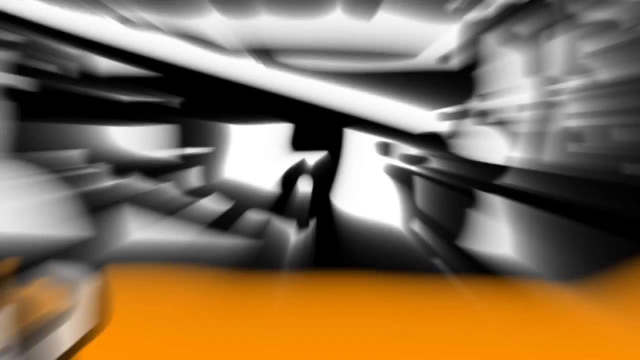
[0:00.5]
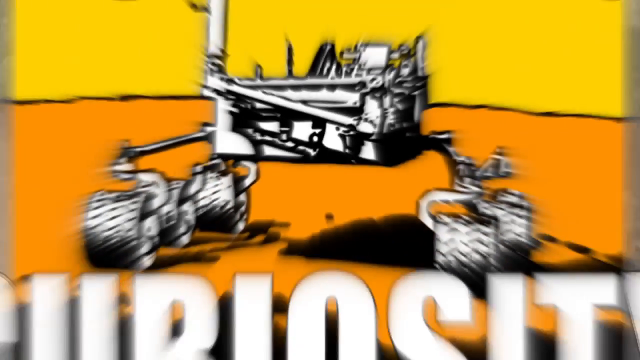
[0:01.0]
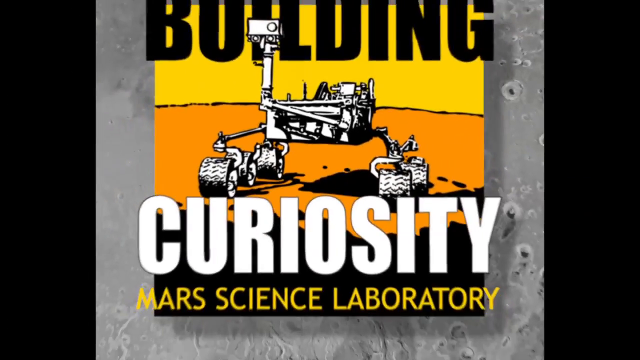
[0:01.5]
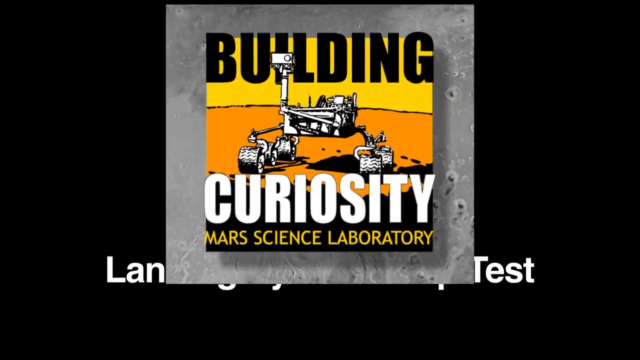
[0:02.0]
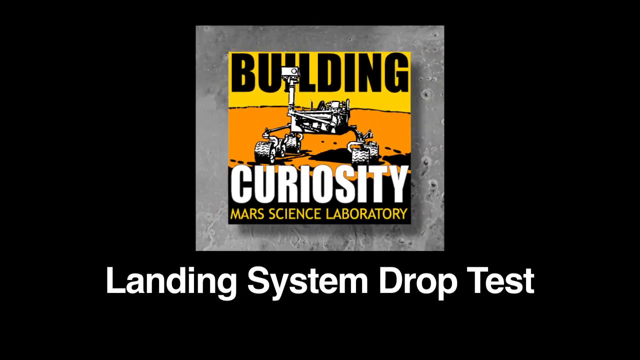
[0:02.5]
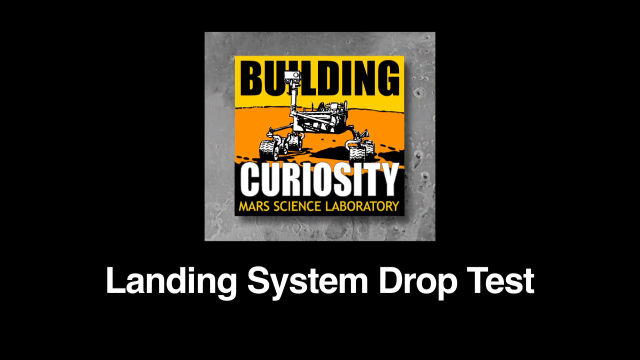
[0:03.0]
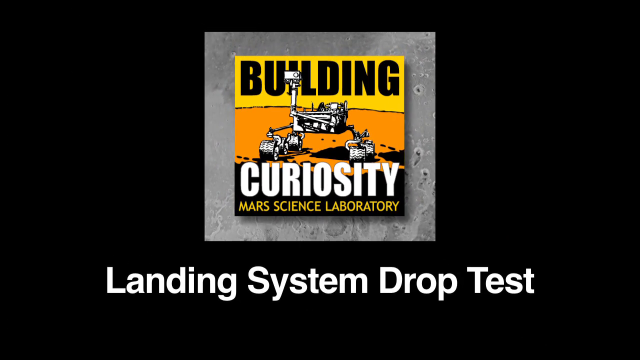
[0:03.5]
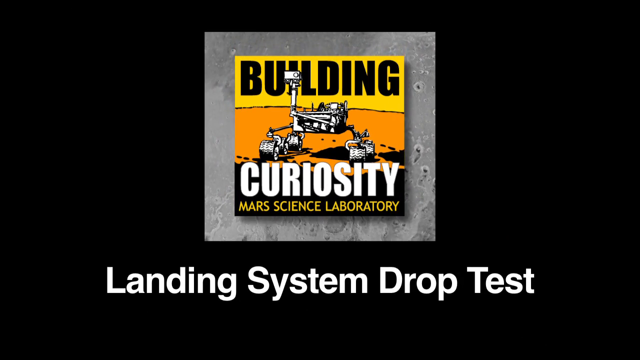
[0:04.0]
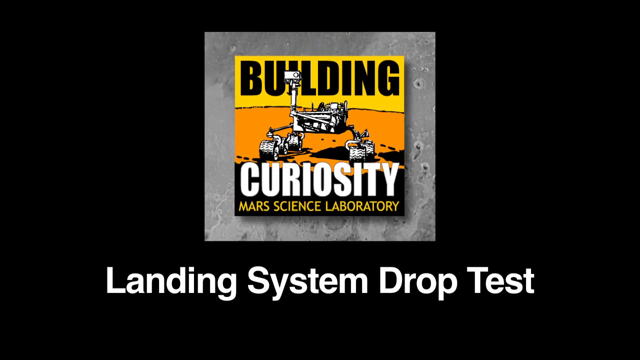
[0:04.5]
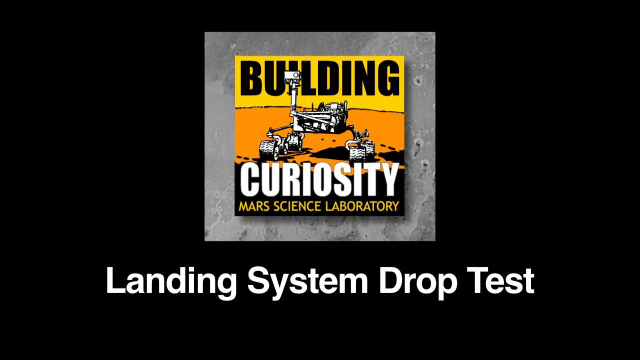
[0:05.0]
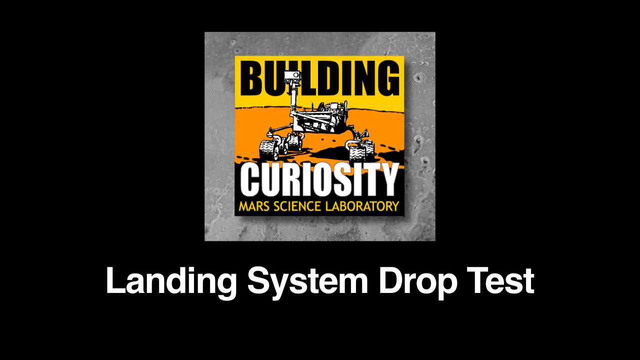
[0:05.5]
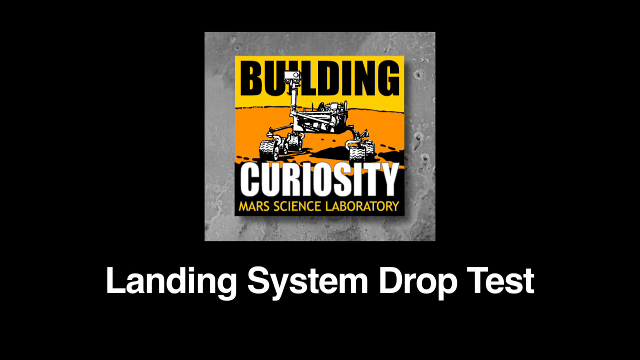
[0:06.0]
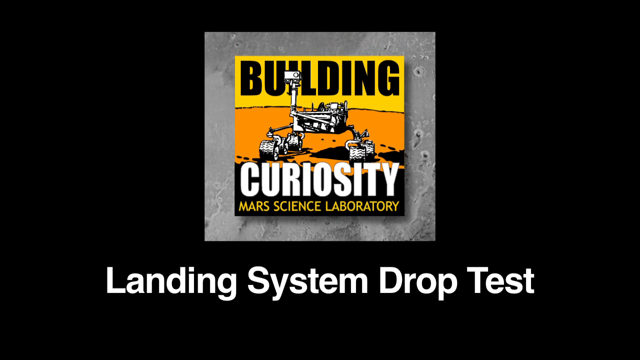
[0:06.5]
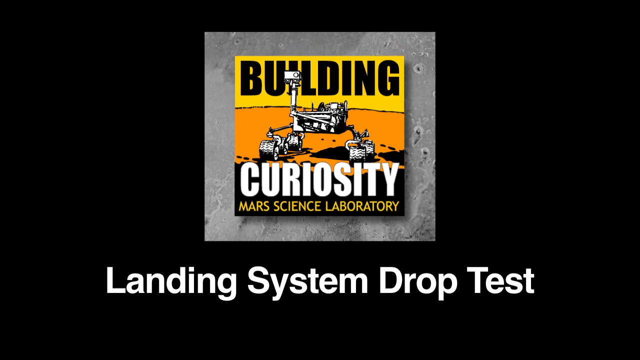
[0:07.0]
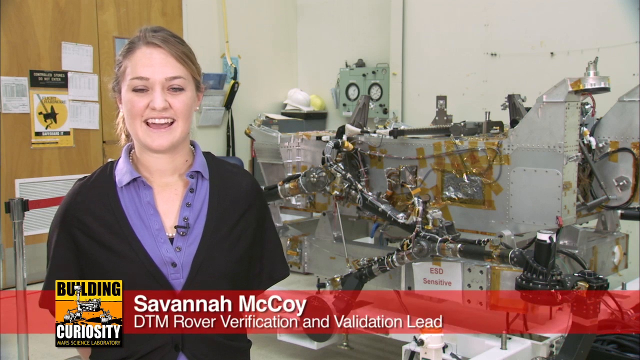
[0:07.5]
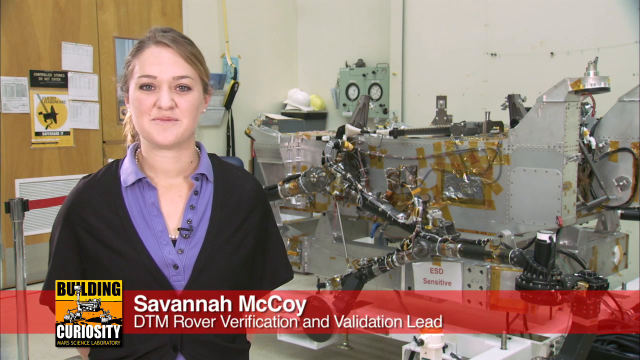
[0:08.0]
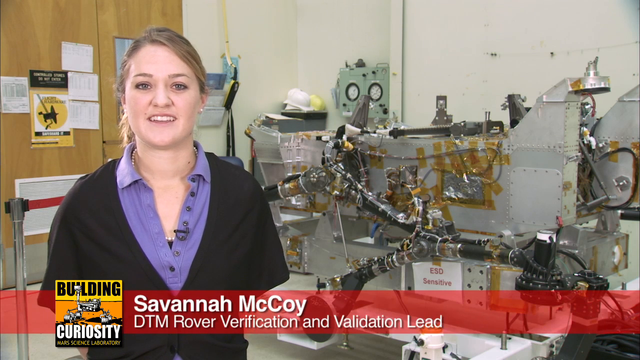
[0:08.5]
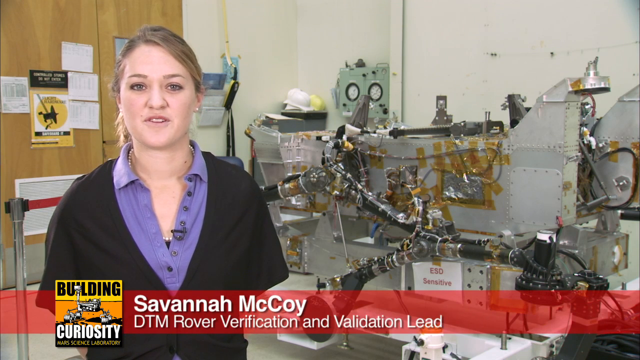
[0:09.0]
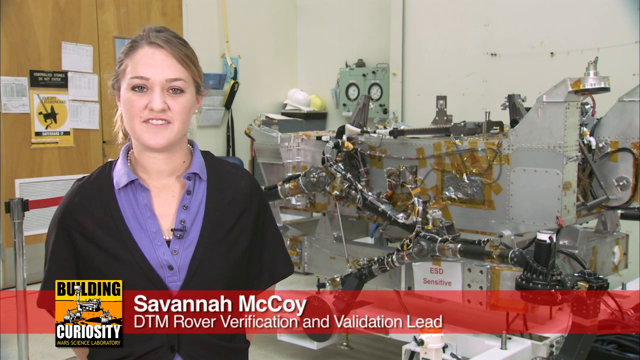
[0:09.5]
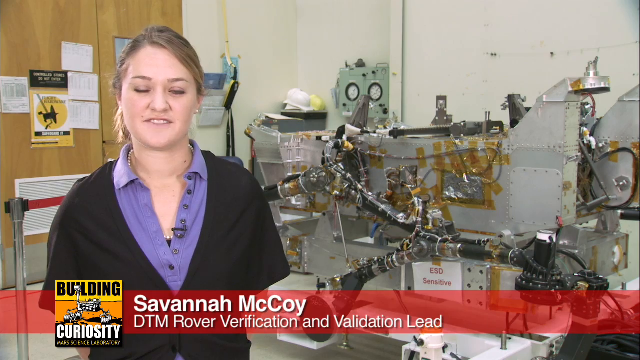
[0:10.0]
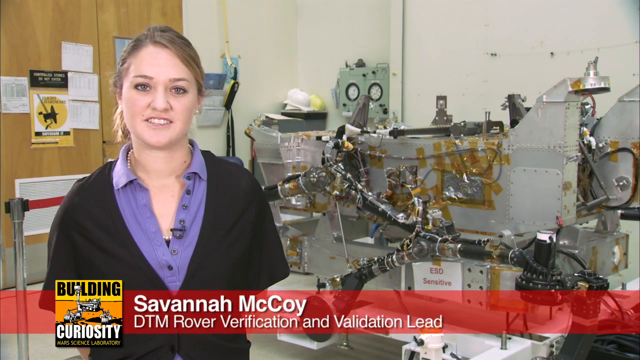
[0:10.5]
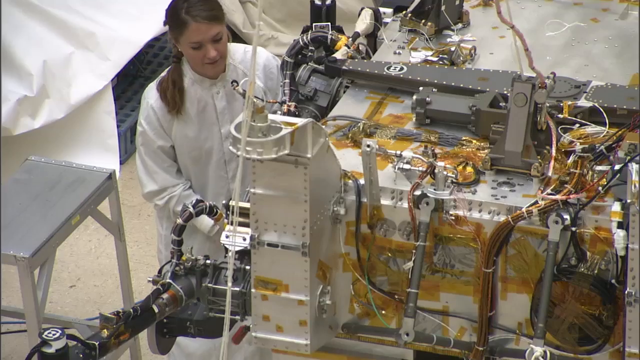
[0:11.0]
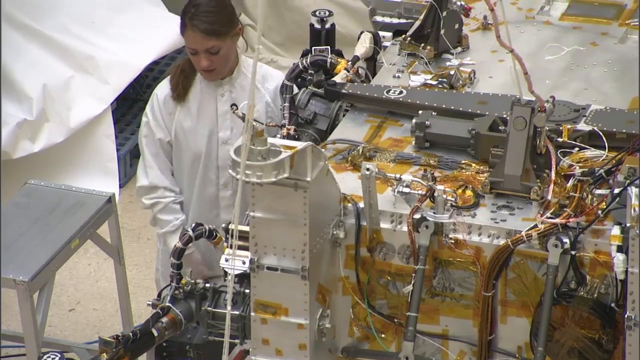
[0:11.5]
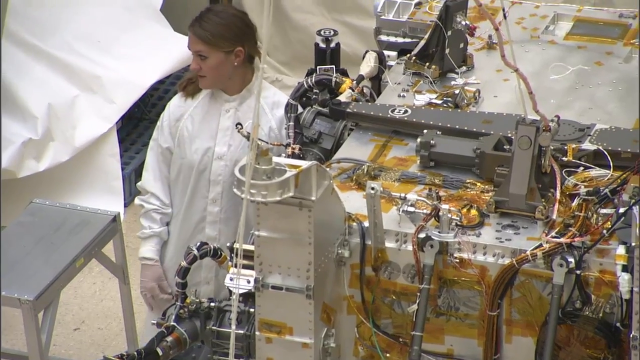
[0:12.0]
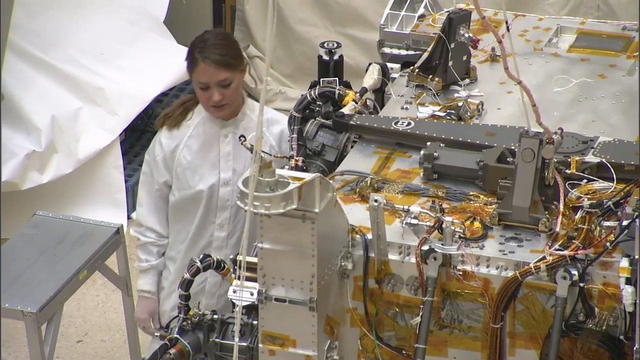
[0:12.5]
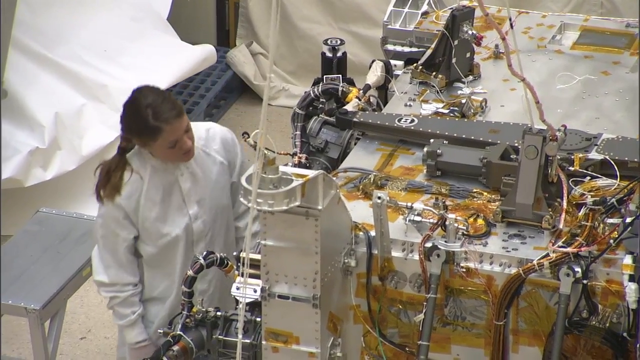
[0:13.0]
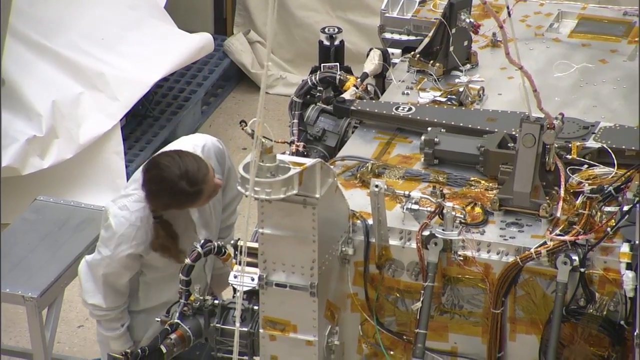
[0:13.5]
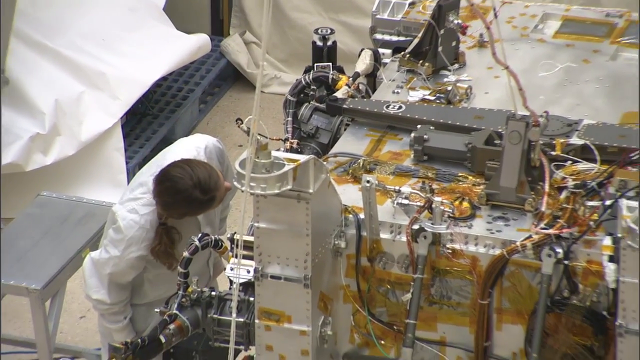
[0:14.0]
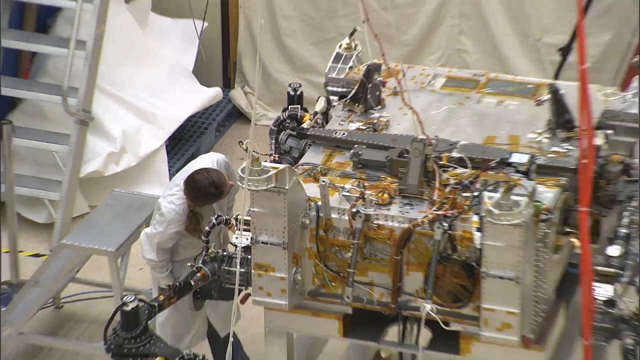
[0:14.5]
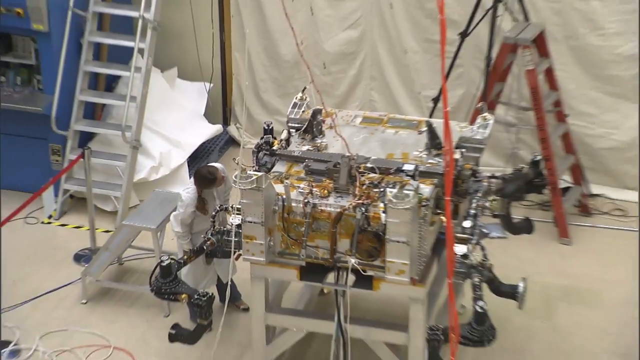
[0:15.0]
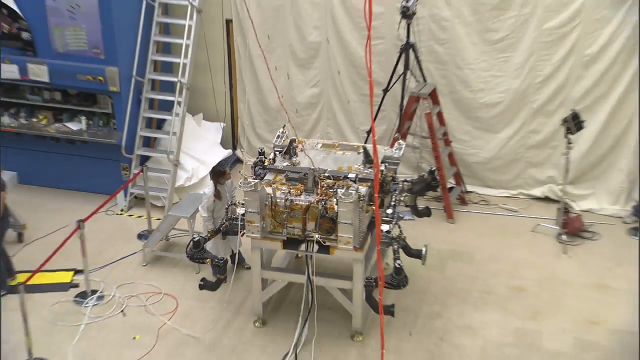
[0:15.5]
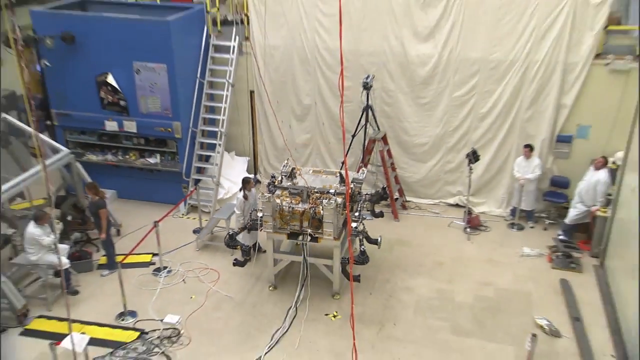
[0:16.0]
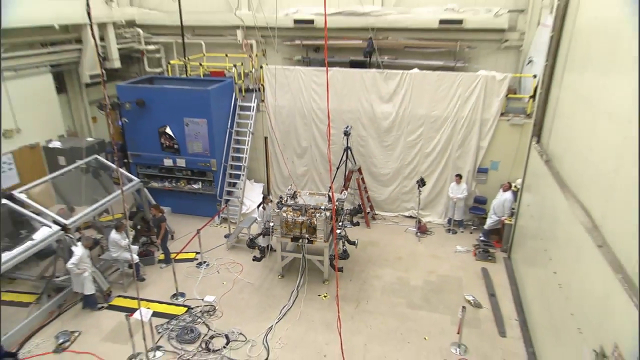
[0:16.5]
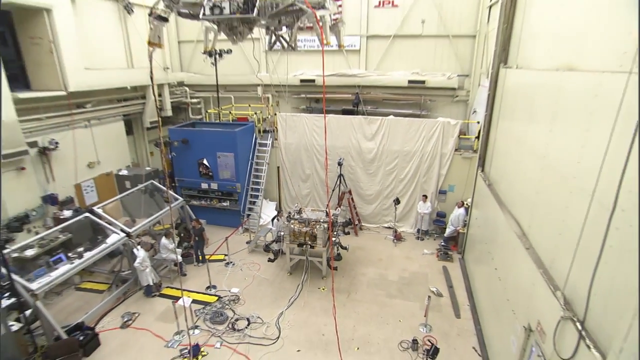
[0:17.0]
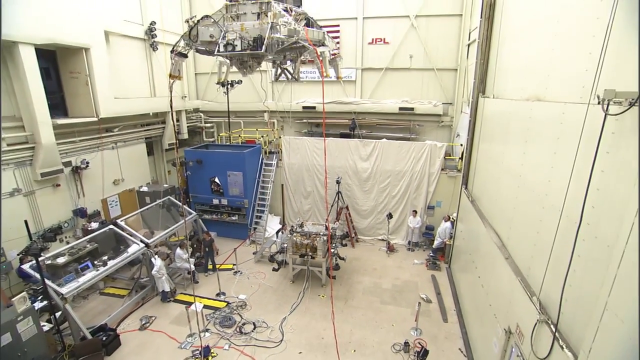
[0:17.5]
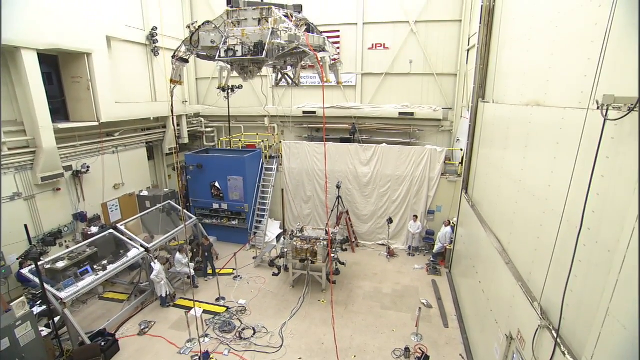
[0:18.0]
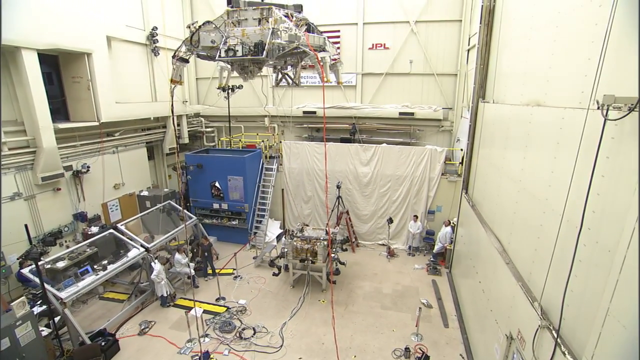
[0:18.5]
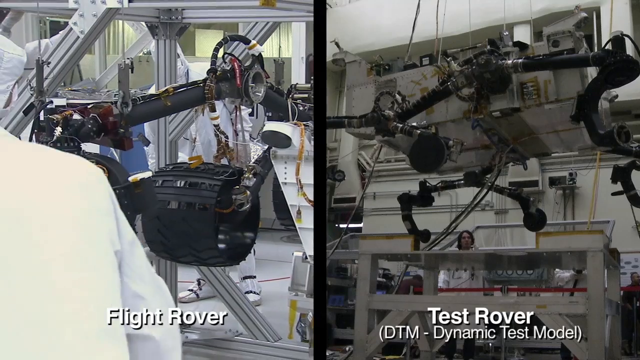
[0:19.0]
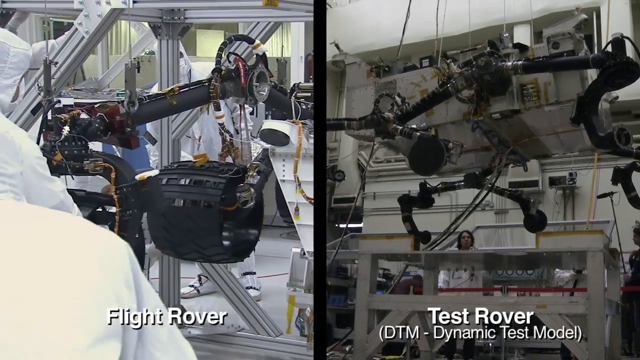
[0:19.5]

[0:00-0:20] The video opens with the title "Building Curiosity Mars Science Laboratory: Landing System Drop Test" and then moves to a woman named Savannah McCoy, the Rover Verification and Validation Lead, who appears to be talking about a testing model of Mars rover equipment being built. She is in a huge lab, looking at the model currently being worked on, with all its different components visible, and above it another rover part is hanging. A flight rover is shown, as well as a test rover.